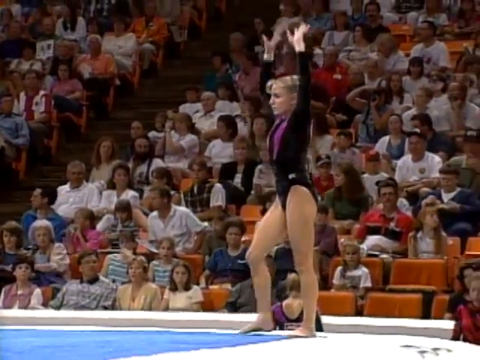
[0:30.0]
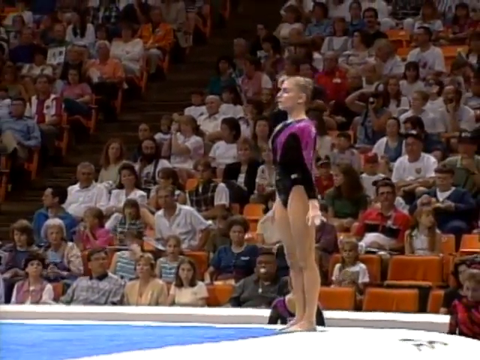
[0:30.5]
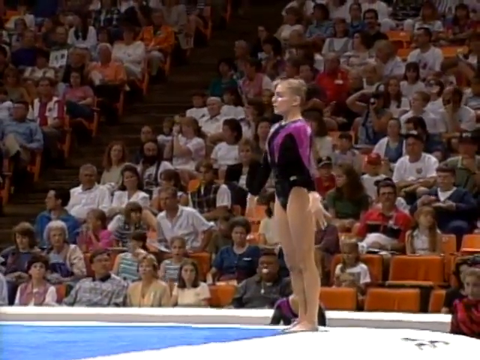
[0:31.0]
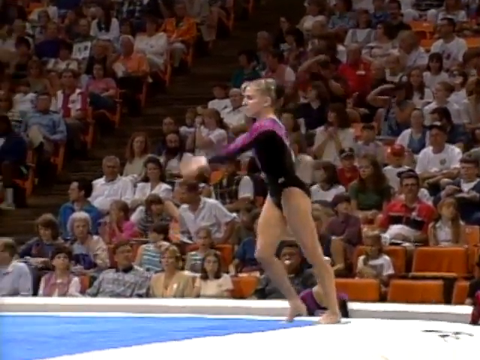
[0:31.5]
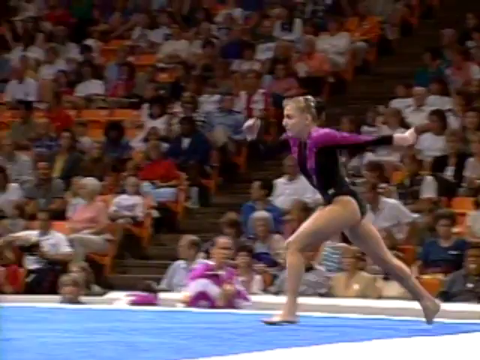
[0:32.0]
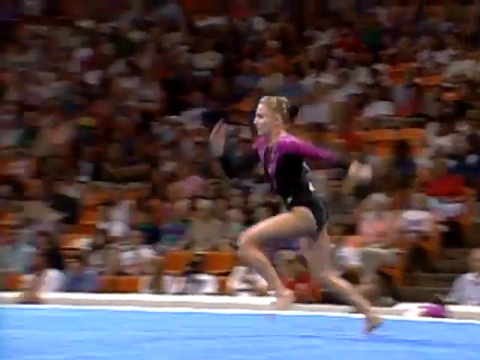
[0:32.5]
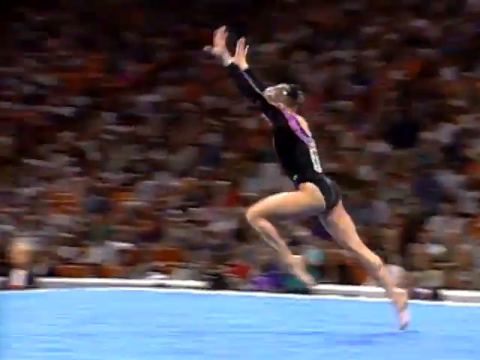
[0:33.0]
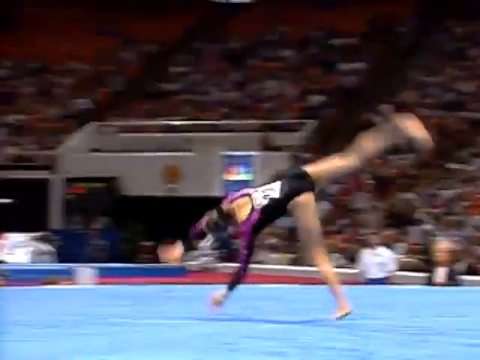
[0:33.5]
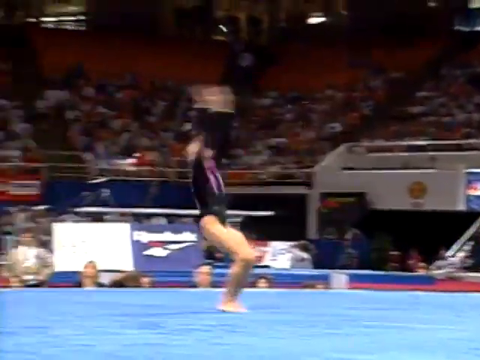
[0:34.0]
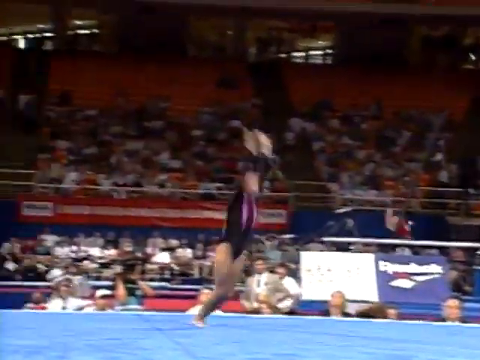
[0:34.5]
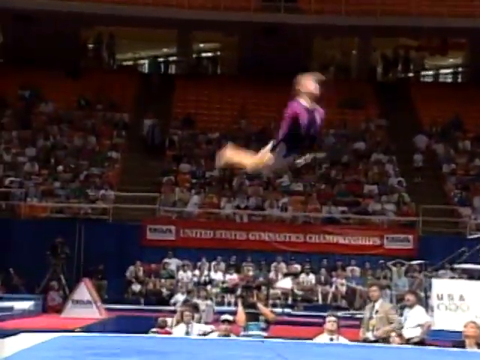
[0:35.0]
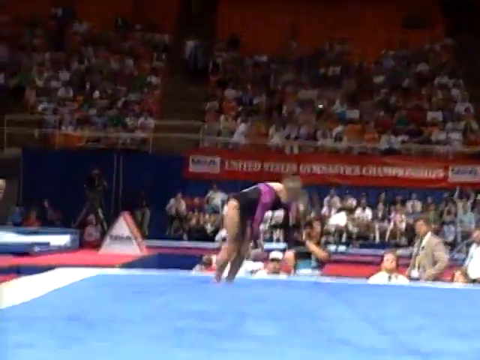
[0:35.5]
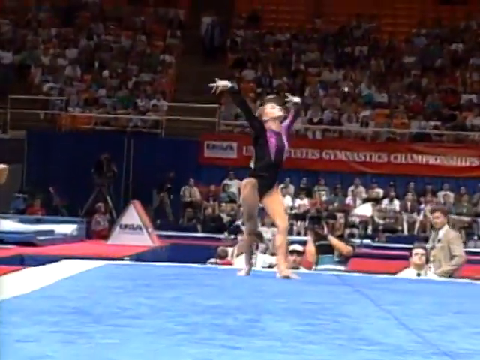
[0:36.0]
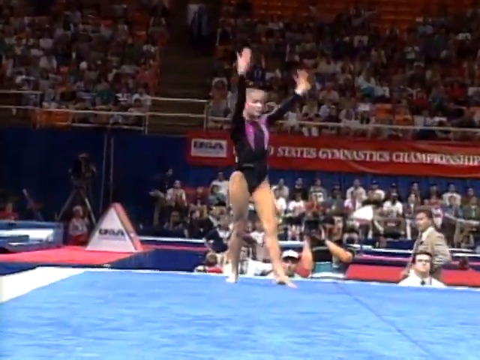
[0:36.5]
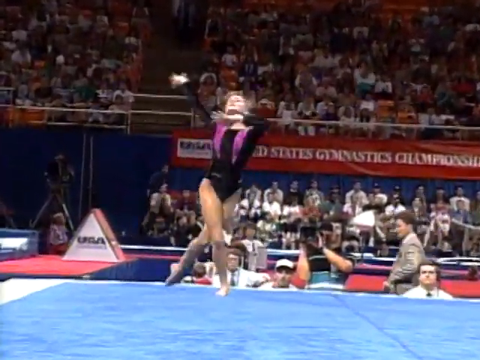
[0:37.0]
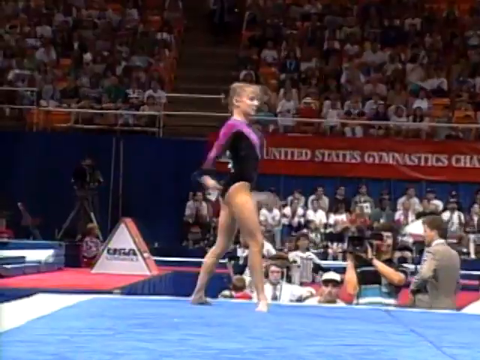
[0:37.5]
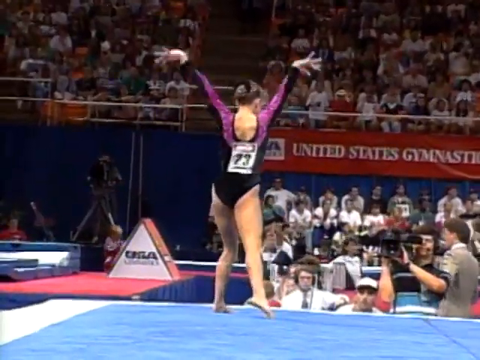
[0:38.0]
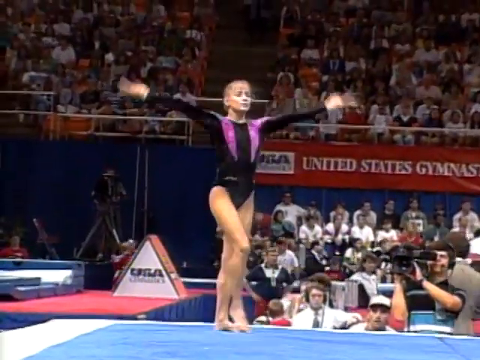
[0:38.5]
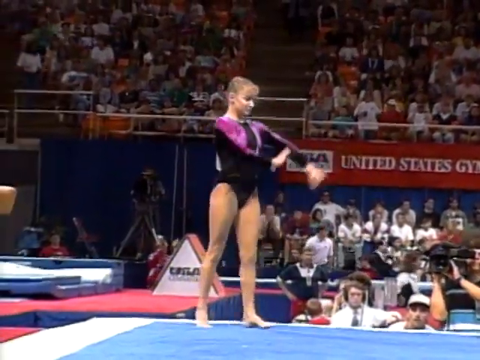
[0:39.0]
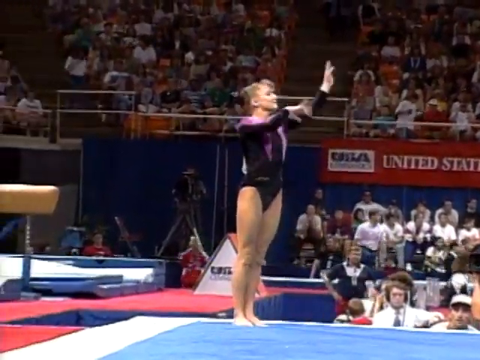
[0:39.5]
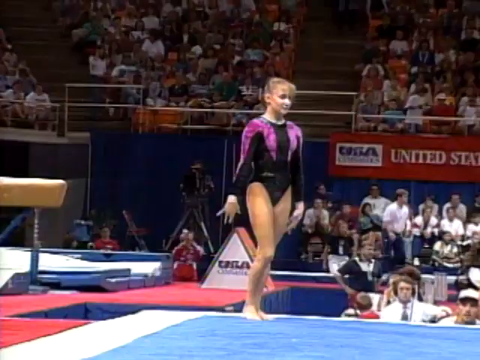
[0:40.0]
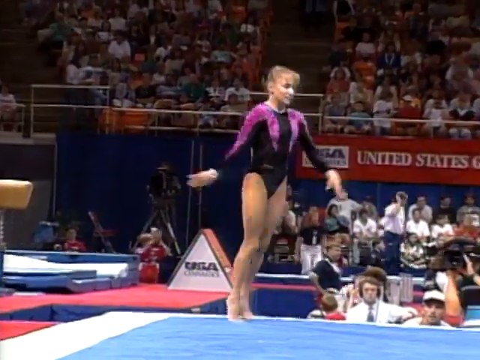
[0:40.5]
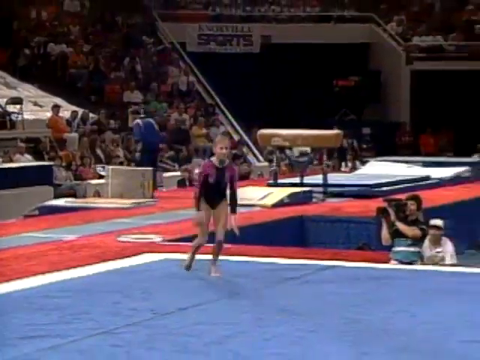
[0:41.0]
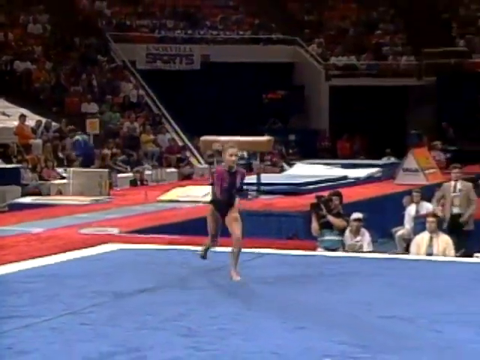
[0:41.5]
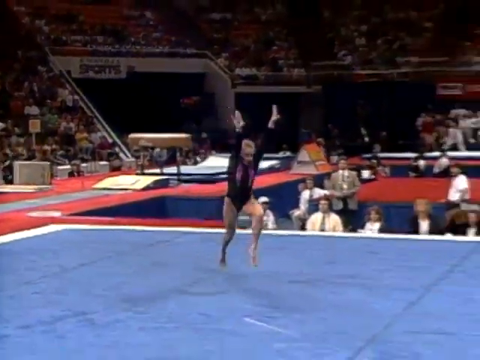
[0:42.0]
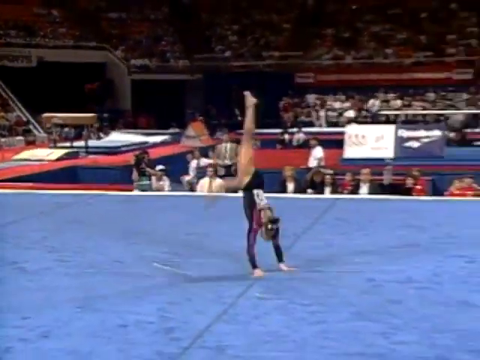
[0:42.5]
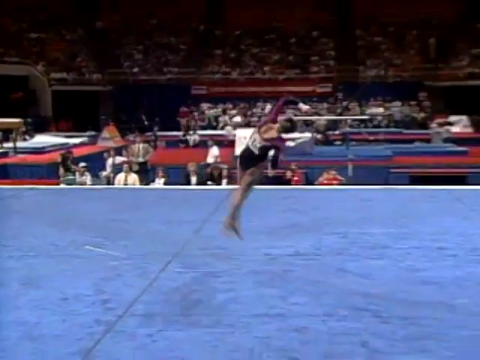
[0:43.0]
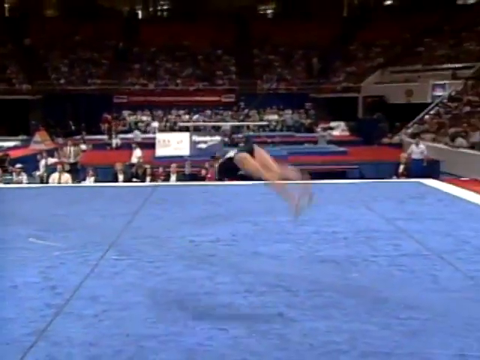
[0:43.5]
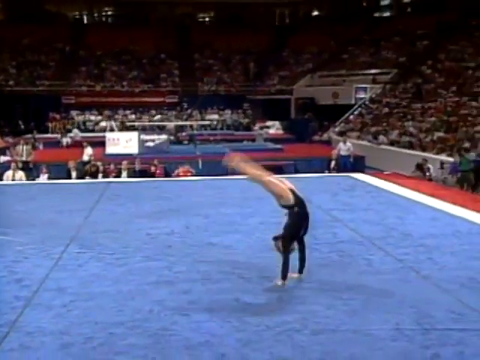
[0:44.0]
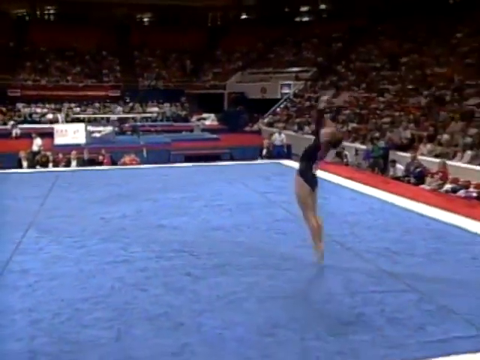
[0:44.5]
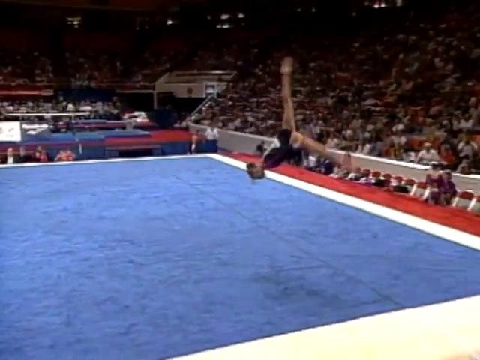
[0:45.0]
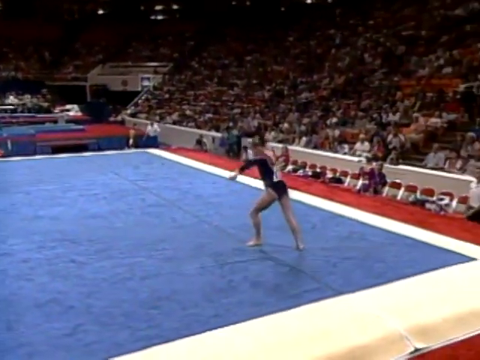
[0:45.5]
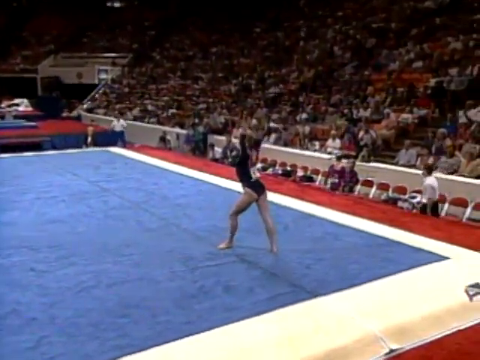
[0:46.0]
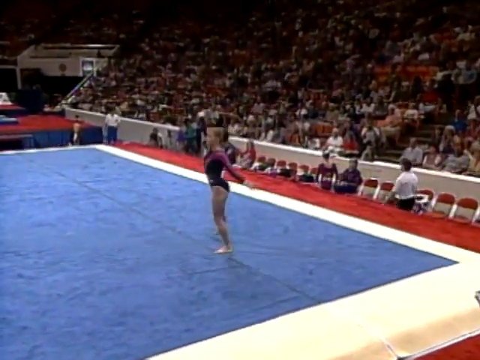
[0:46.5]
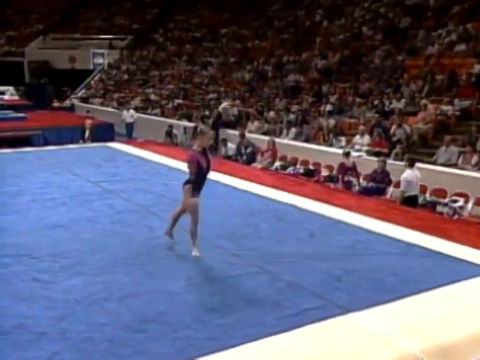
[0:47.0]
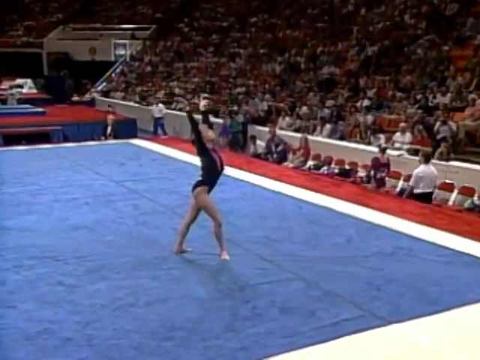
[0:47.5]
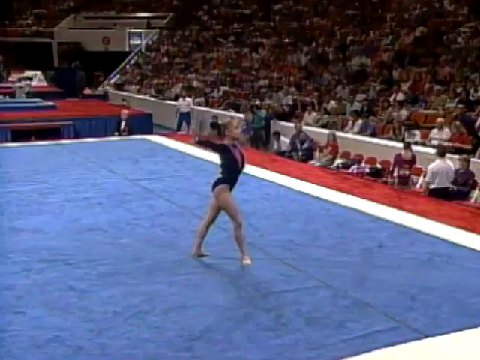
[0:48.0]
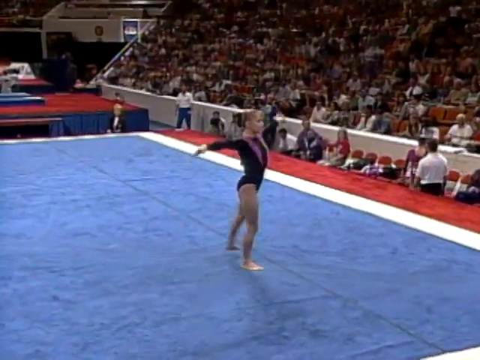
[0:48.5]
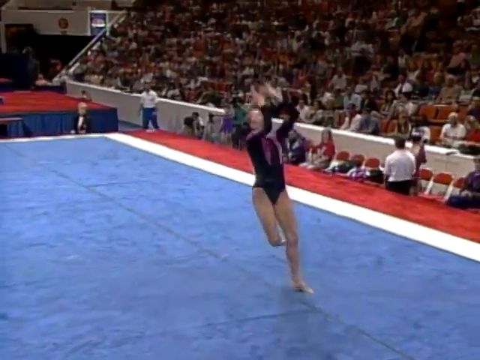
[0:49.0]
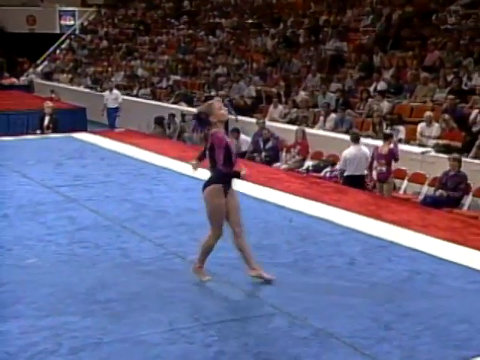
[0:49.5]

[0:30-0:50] A gymnast stands with both hands up. She wears a black leotard with some purple toward the top and has nothing on her feet. Behind her, the crowd mostly fills the orange seats, and it looks like only a few are open. Based on the quality, the video looks like it could be from the mid to late 90s. She puts her arms down, springs forward and sprints, does a handspring forward, starts doing flips, jumps in the air and does a backflip. After landing she strikes a couple of poses and gets ready to go the opposite way. She speeds up and runs, does a couple of handstands and another backflip, two backflips in all, then gets ready for the next part of her routine. The mat below her is blue with a white square outline marking the out-of-bounds.